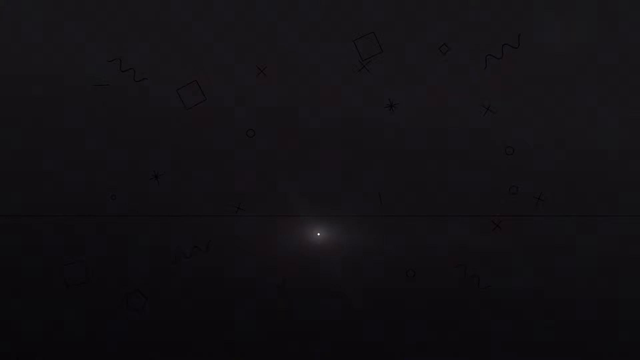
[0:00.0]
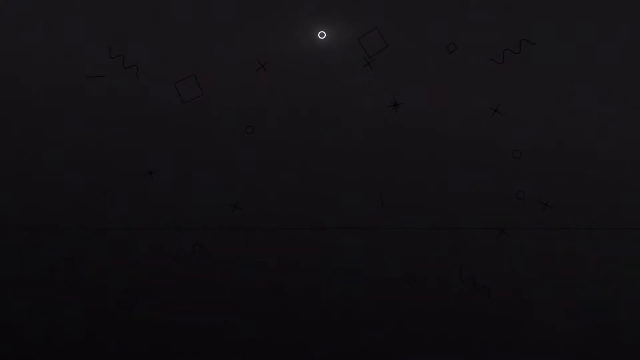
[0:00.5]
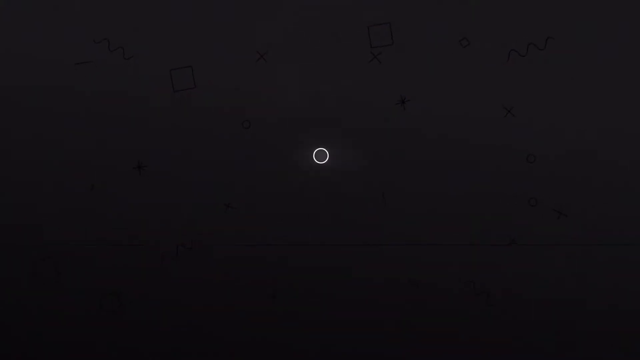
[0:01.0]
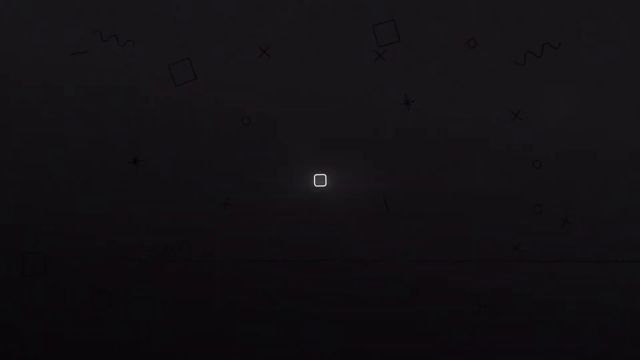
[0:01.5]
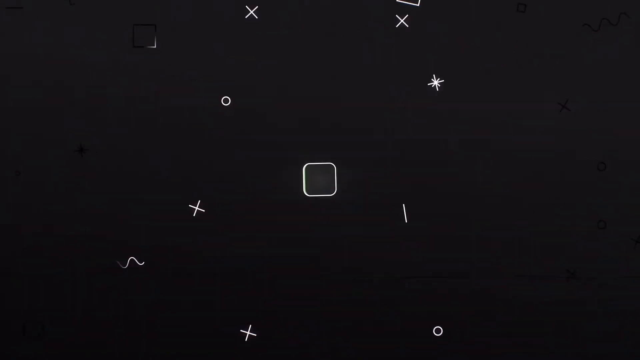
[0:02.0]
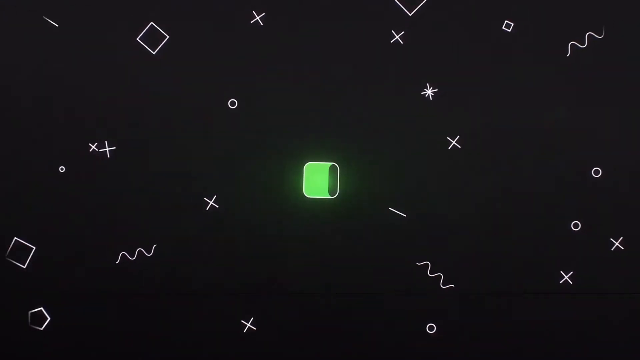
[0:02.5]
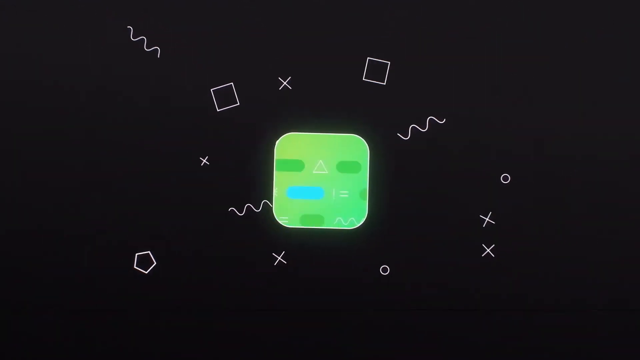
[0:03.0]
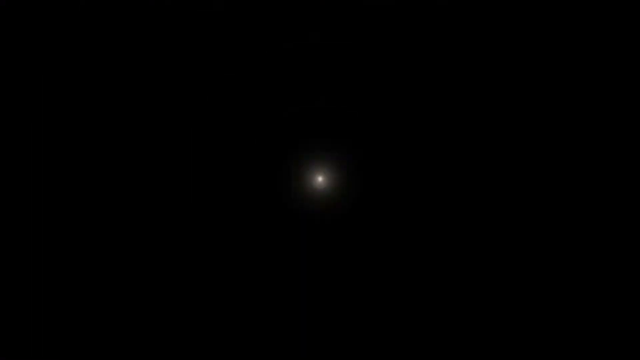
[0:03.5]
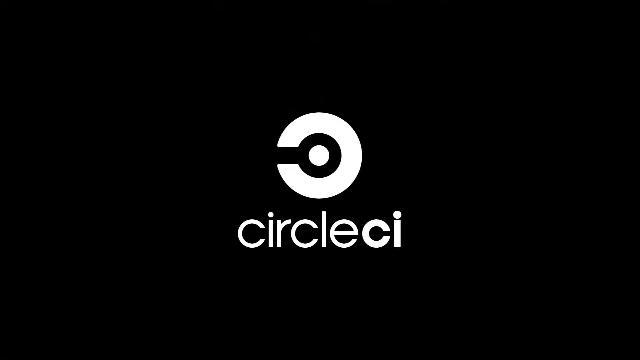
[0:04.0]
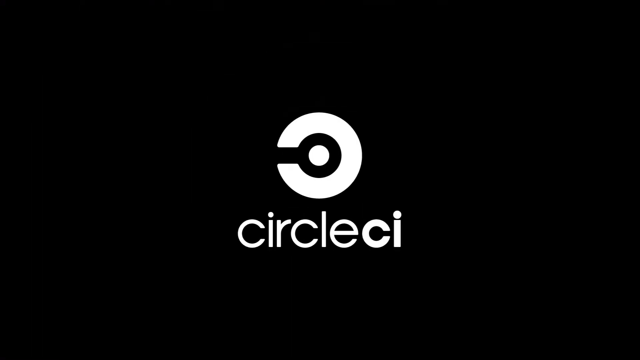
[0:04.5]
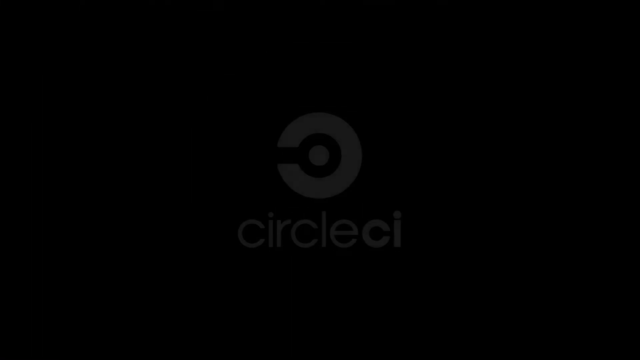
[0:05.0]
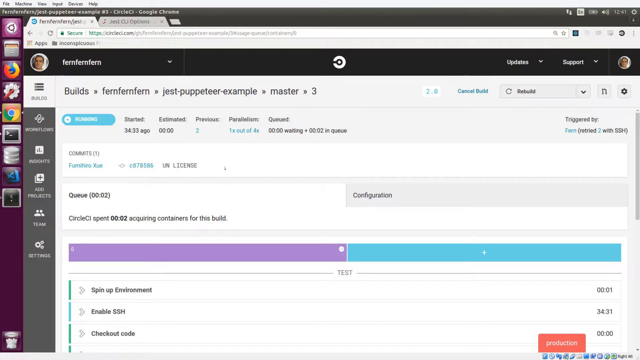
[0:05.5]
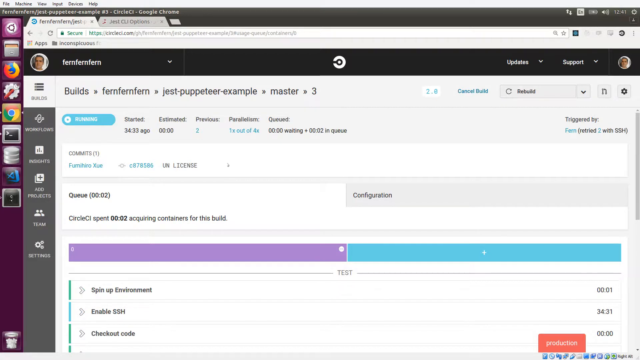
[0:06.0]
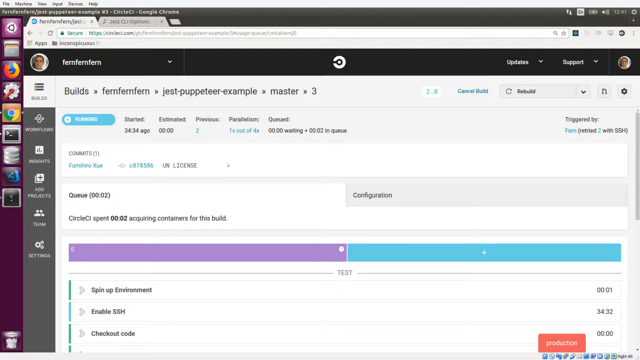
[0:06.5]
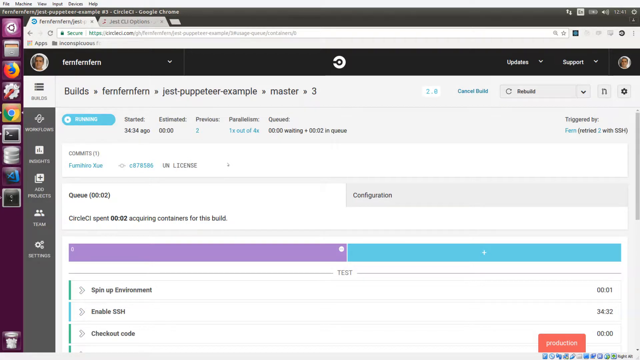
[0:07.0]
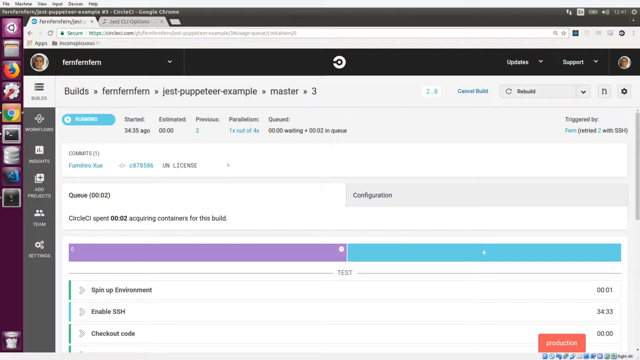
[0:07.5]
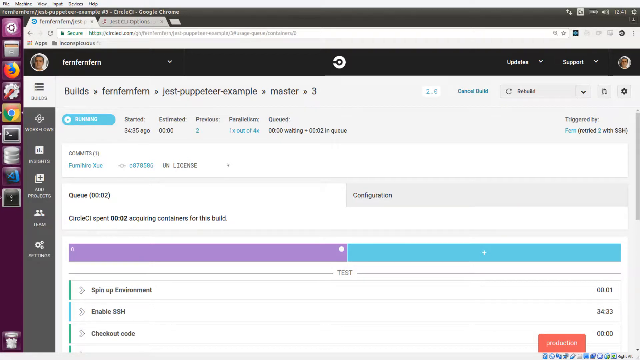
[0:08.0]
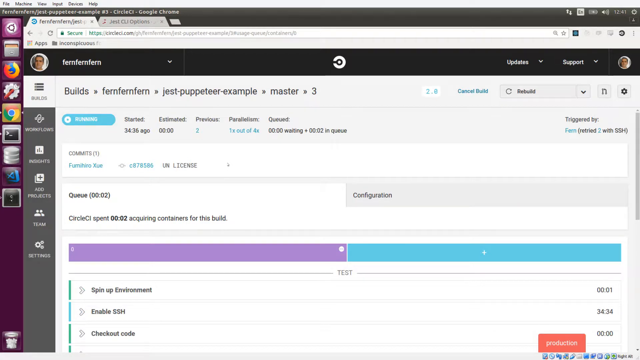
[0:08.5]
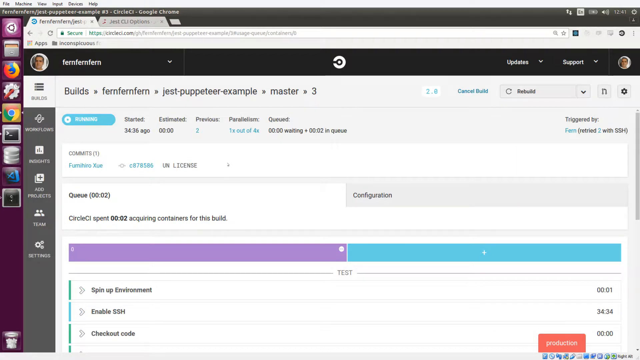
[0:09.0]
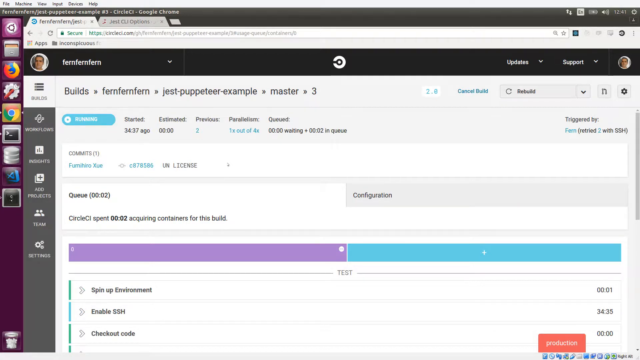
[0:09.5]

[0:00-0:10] The video opens on what appears to be an introduction or landing screen for CircleCI, a program that looks like it is used to run a build, apparently for some kind of computer programming. There are plenty of options to select from on the screen, and it appears to be shown on a PC.